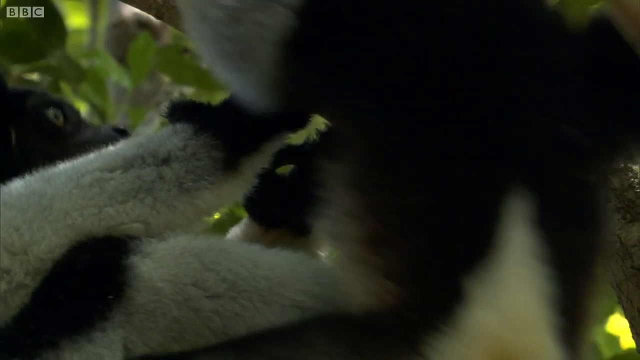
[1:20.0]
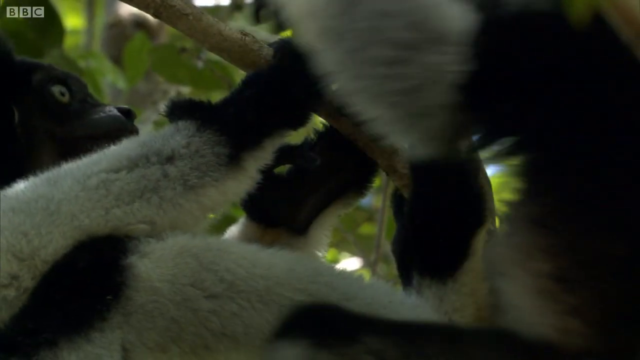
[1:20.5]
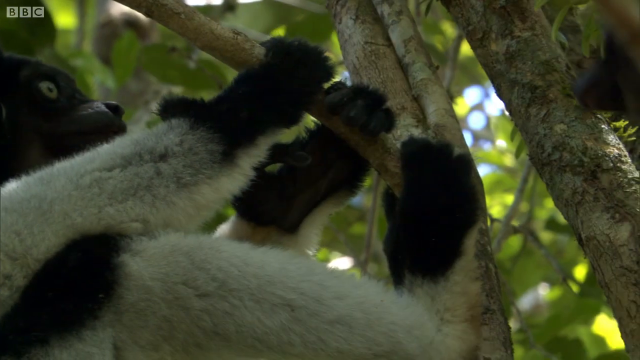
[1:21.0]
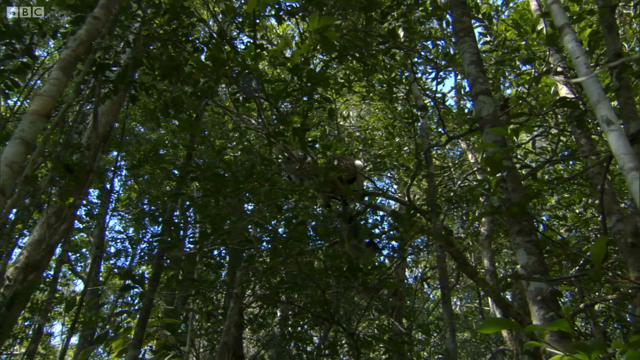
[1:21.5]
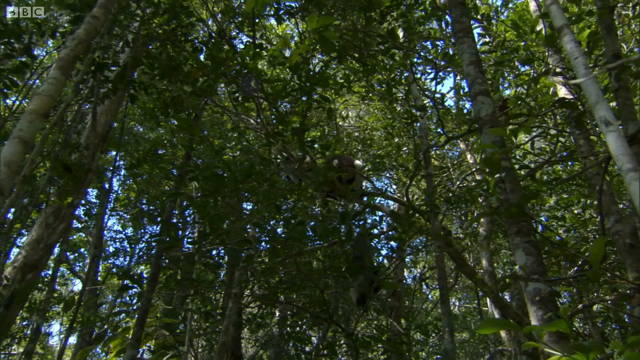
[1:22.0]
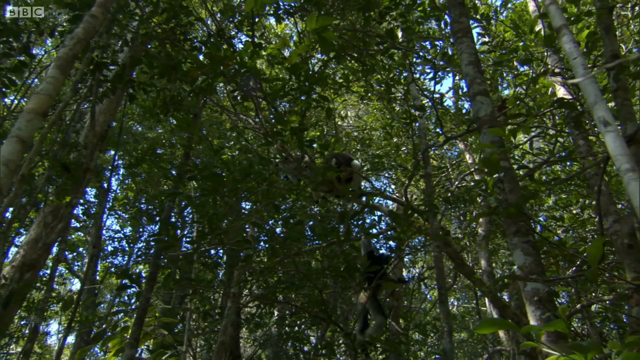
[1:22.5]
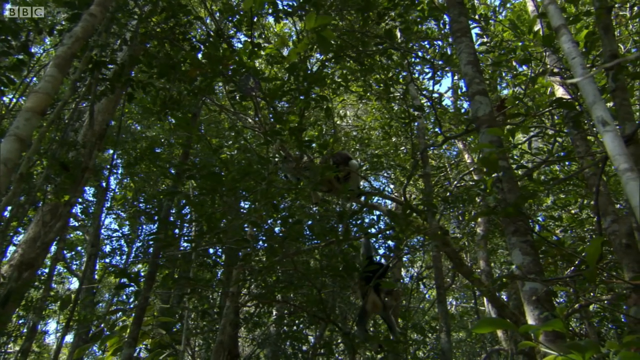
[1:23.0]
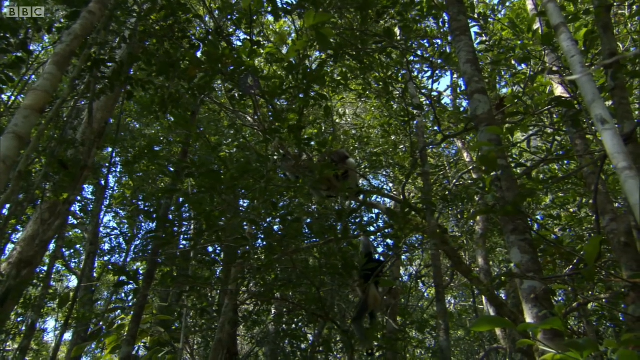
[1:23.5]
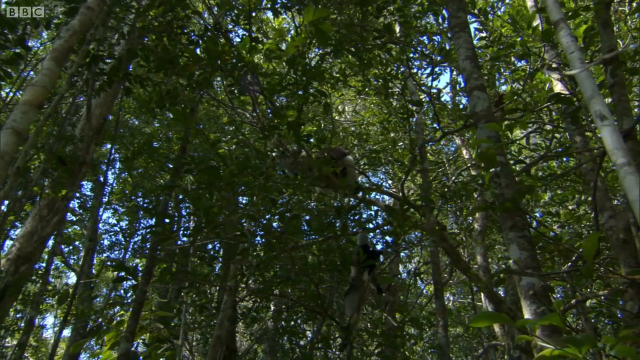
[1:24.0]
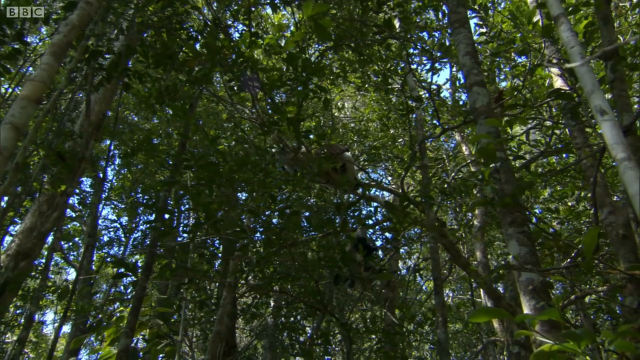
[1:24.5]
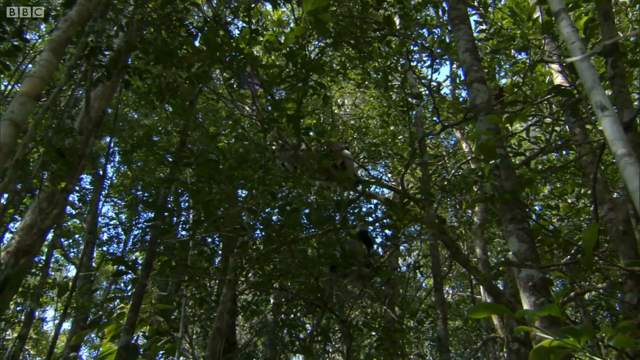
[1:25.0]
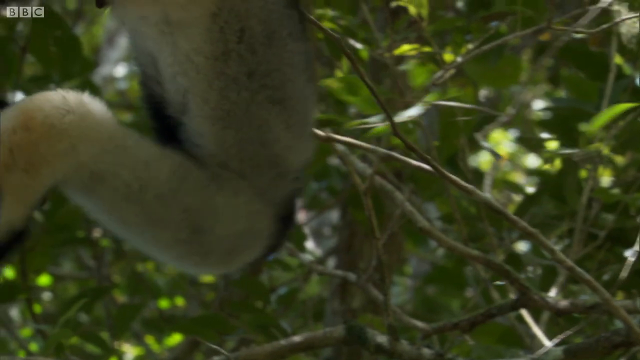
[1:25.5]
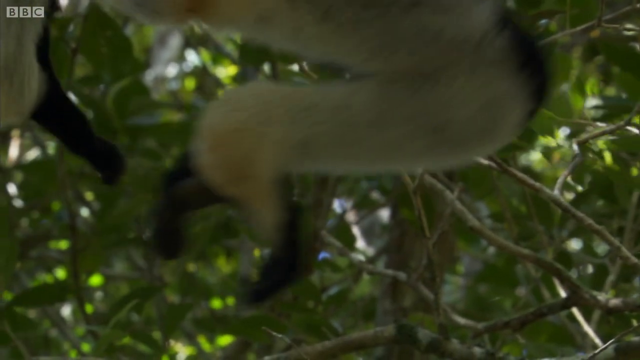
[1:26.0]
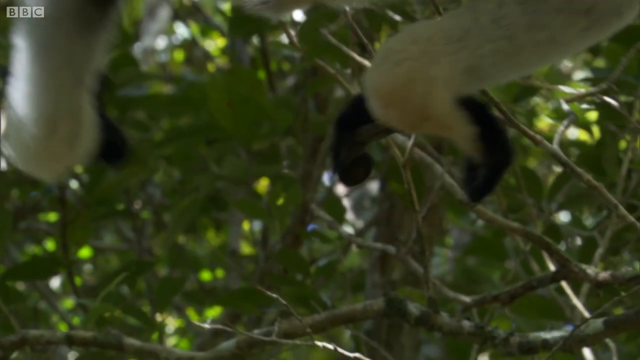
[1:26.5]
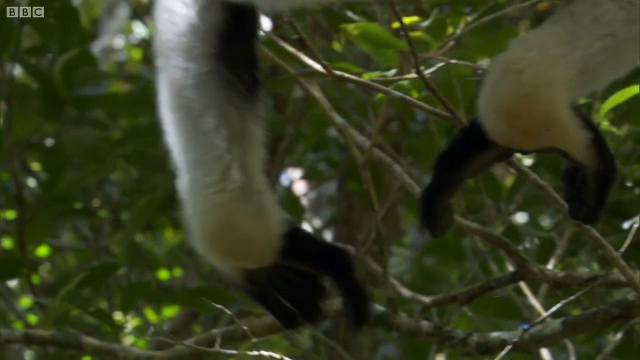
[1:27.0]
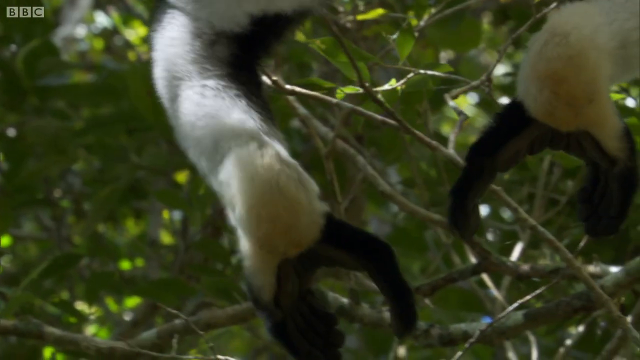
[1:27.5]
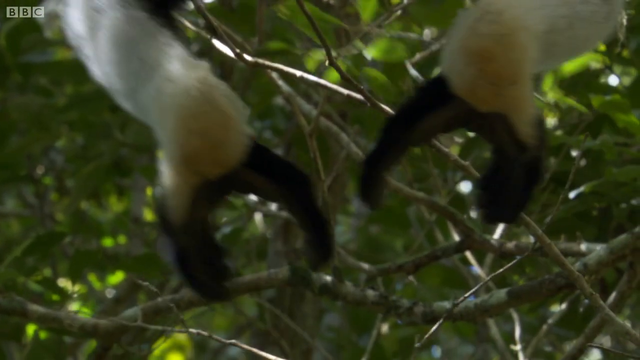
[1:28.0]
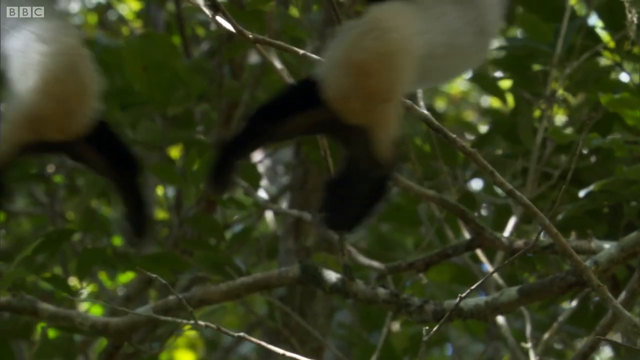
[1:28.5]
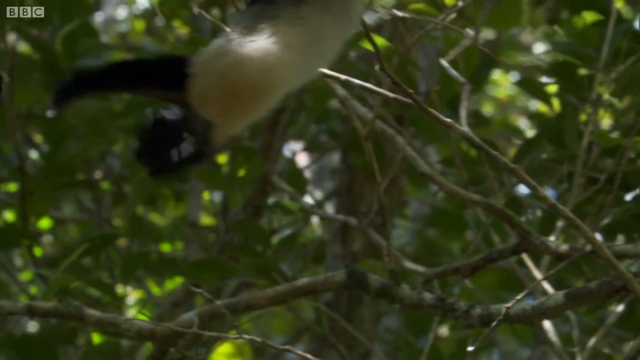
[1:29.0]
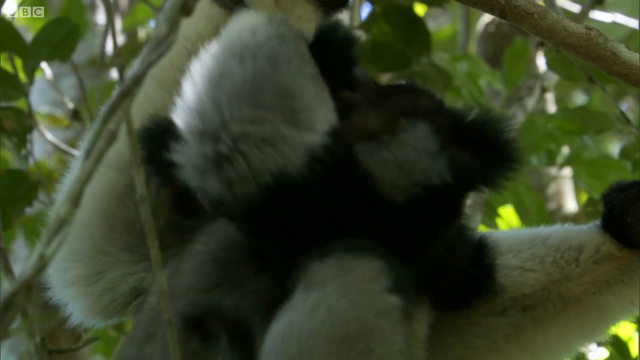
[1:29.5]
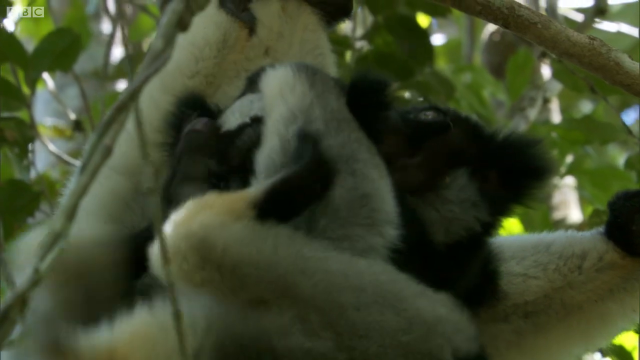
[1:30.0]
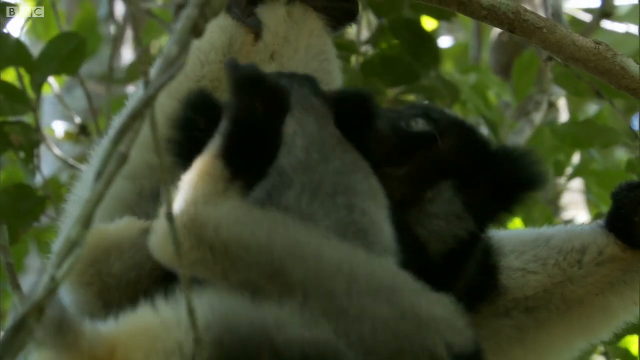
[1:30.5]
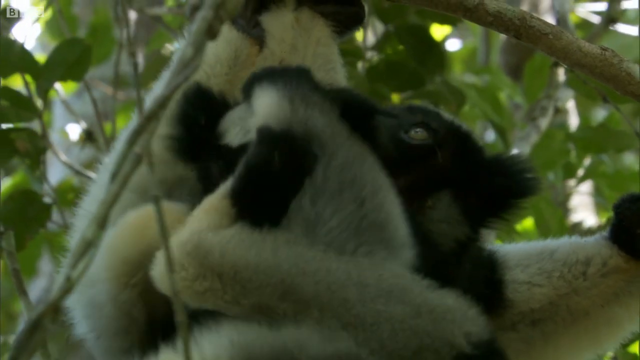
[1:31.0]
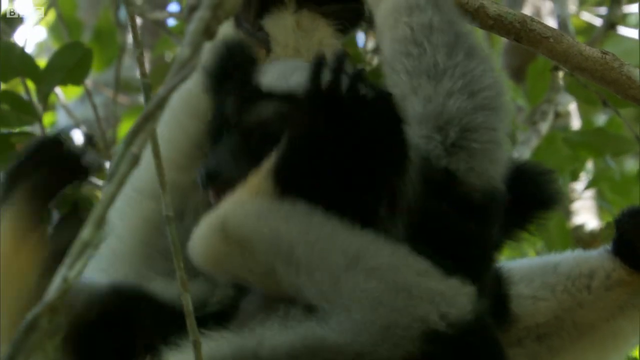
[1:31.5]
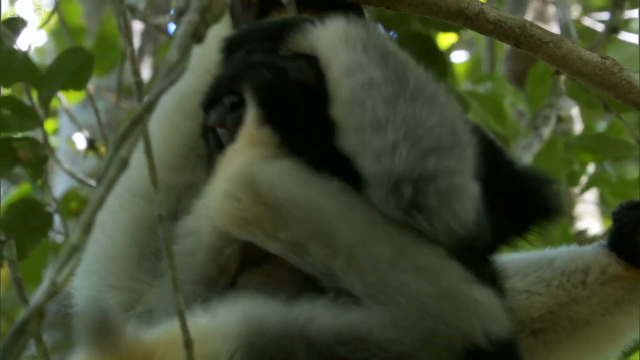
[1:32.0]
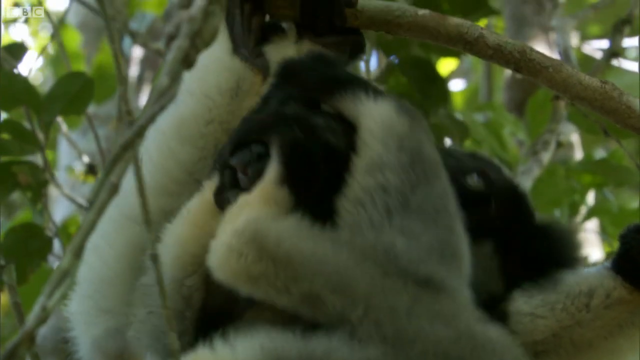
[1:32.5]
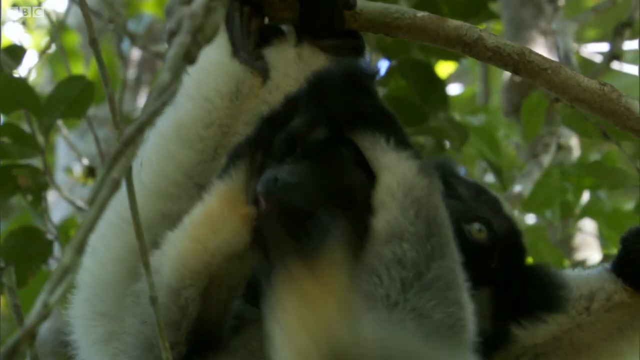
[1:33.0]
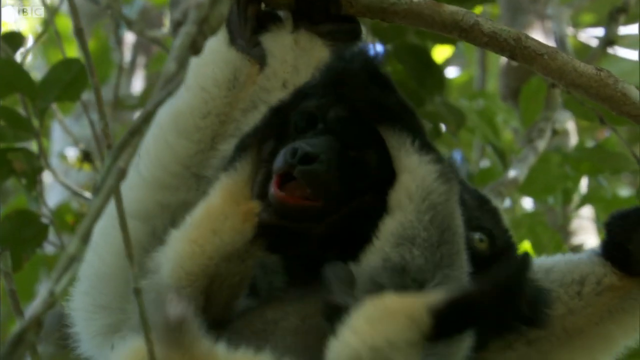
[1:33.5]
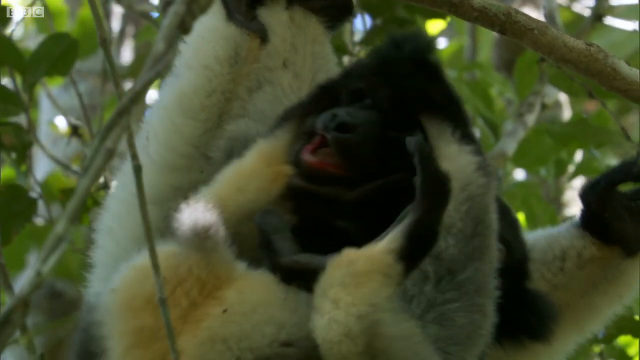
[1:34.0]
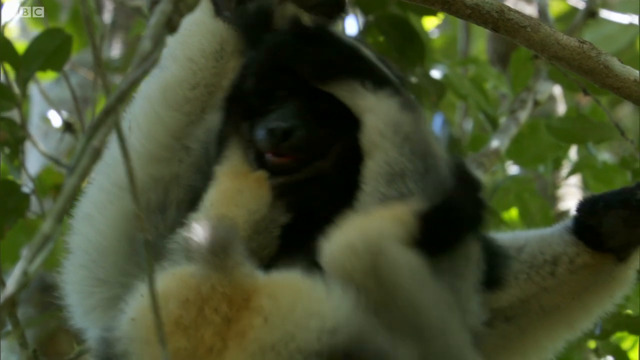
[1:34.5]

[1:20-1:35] Two lemurs are seen so close up that mostly parts of their faces and limbs are visible. The camera pans out a little, showing them hanging off branches, playing with each other by kind of kicking their feet toward each other and swinging from the branches; it looks very playful. In another close-up, the two are kind of putting their feet around each other's heads, seemingly playing. One opens its mouth a little, and the other kind of falls off the branch but catches itself with one hand and climbs back up. It is daytime, with a bit of blue sky visible through the trees.